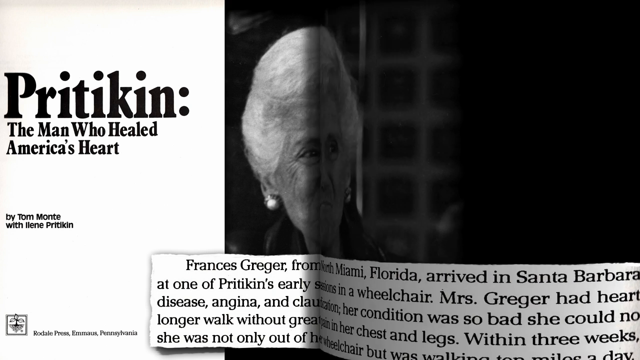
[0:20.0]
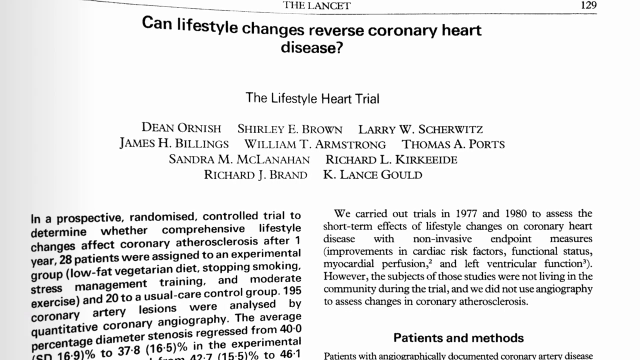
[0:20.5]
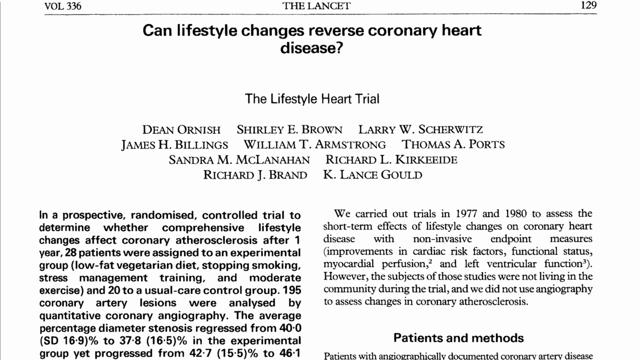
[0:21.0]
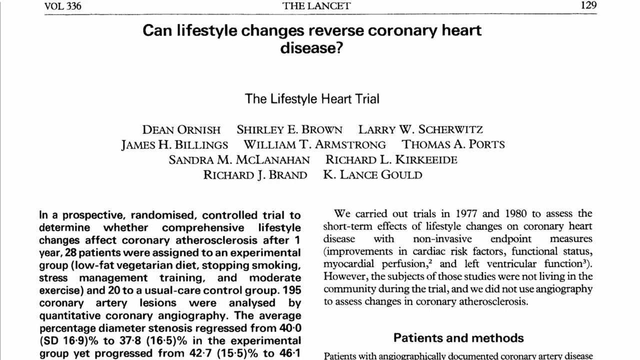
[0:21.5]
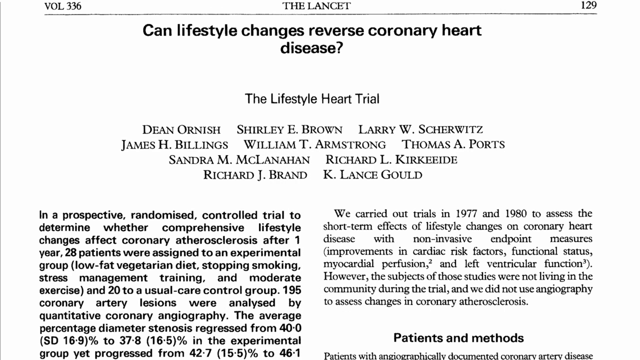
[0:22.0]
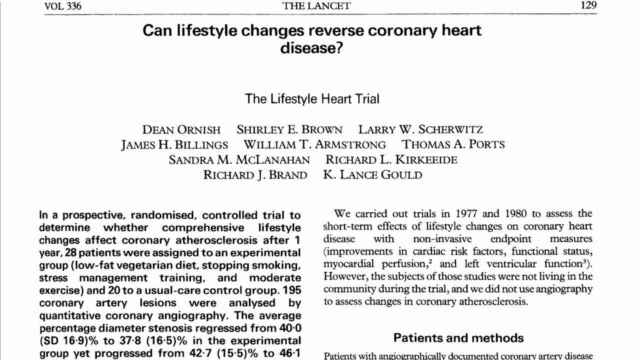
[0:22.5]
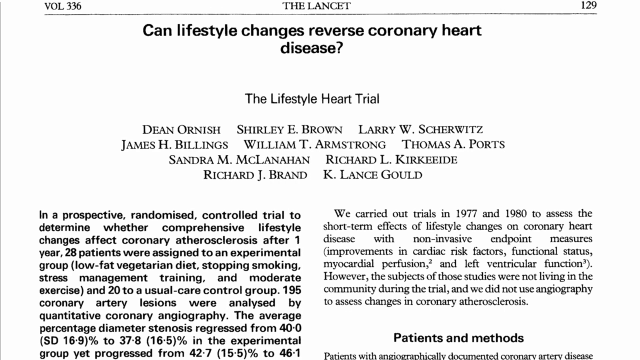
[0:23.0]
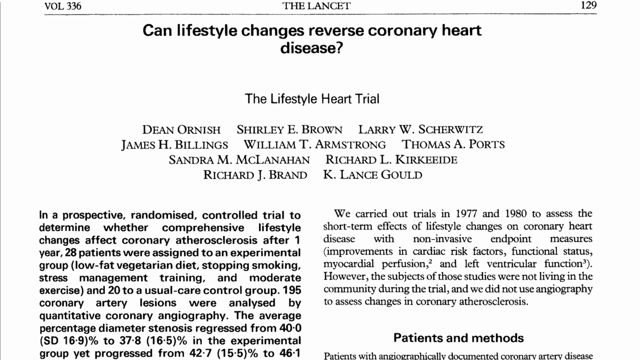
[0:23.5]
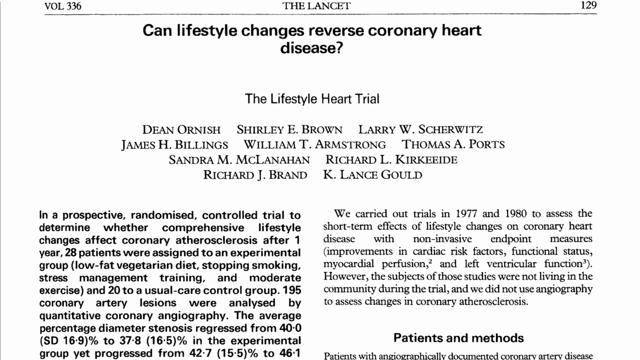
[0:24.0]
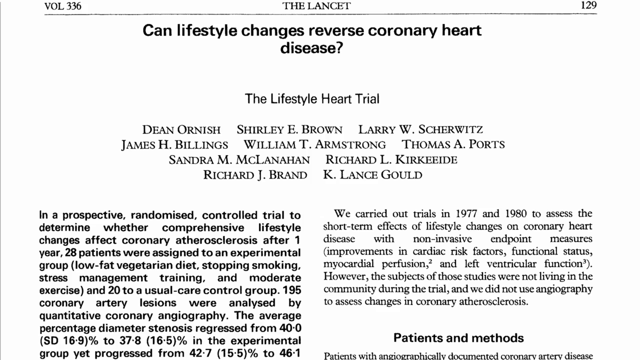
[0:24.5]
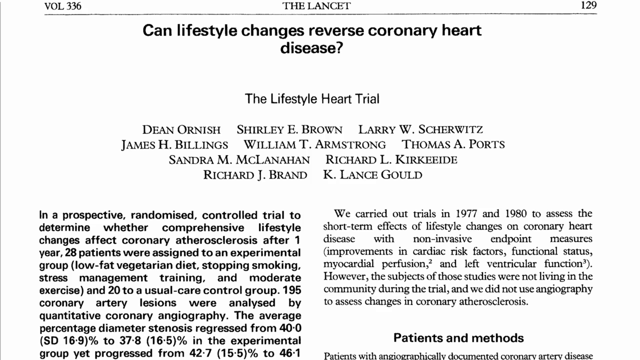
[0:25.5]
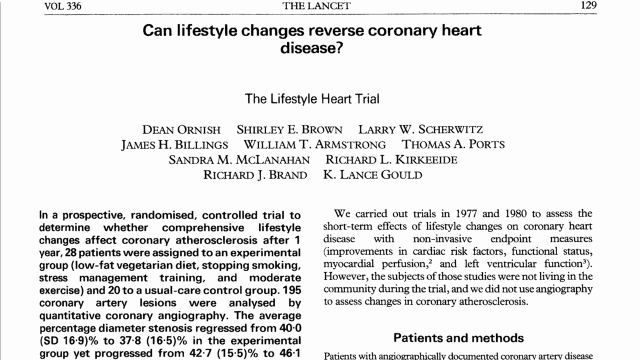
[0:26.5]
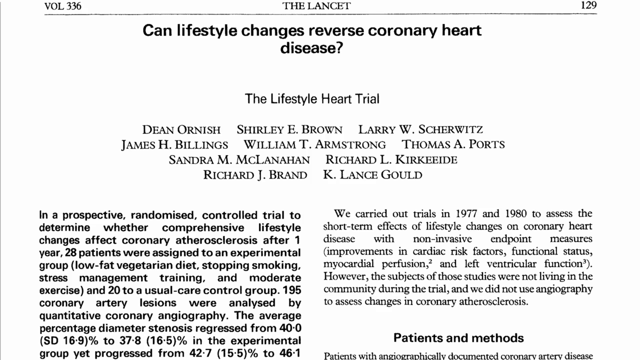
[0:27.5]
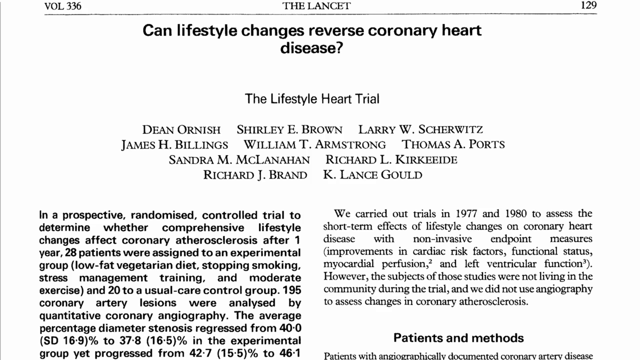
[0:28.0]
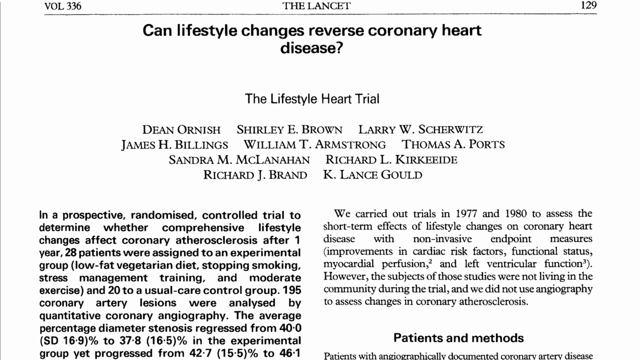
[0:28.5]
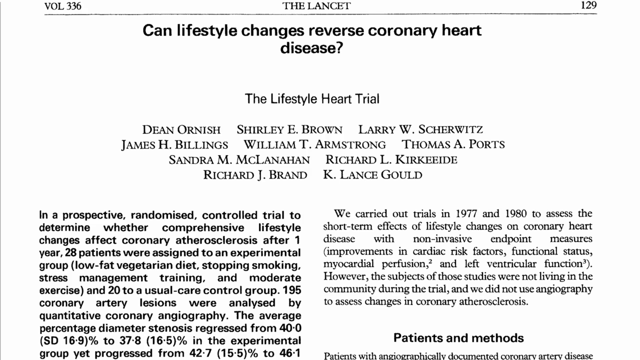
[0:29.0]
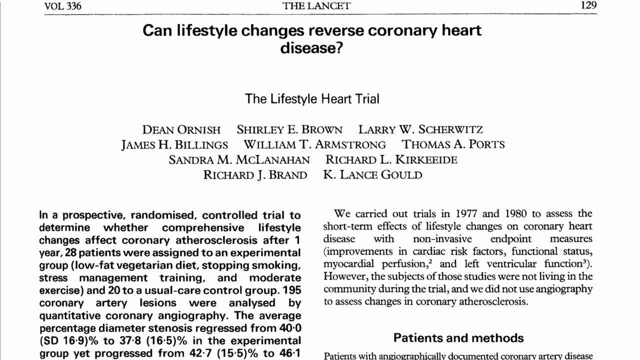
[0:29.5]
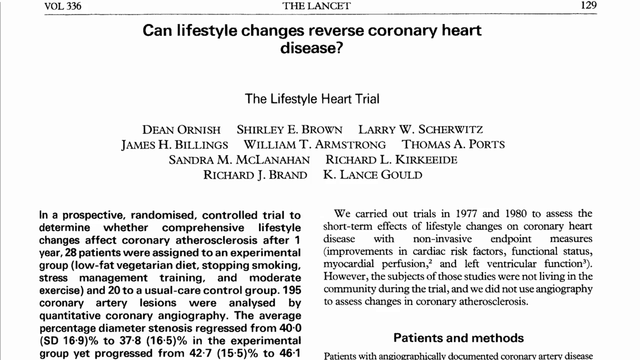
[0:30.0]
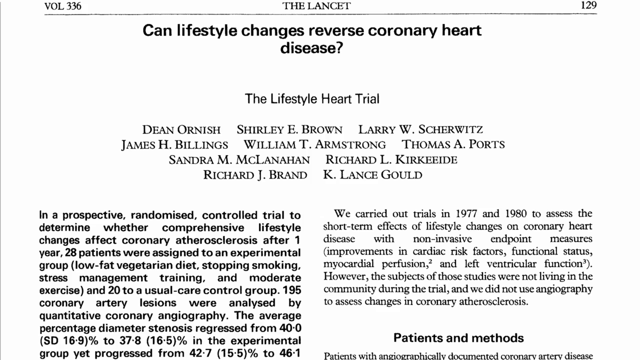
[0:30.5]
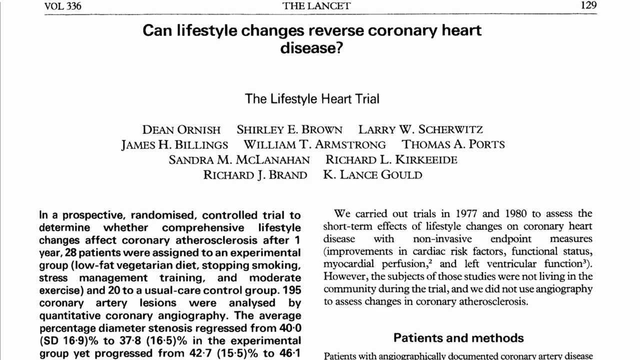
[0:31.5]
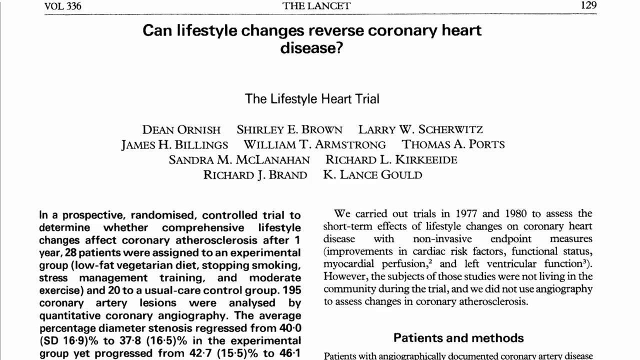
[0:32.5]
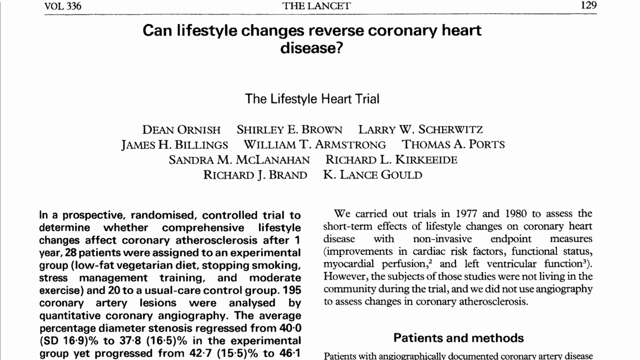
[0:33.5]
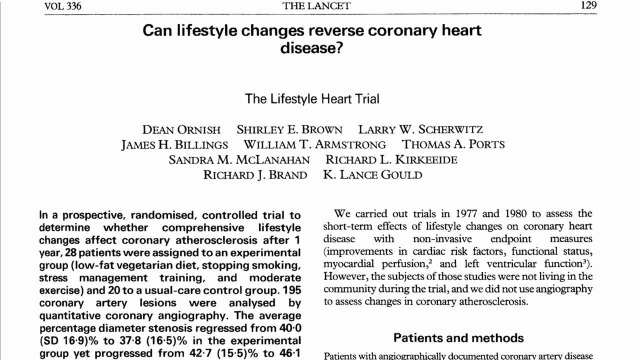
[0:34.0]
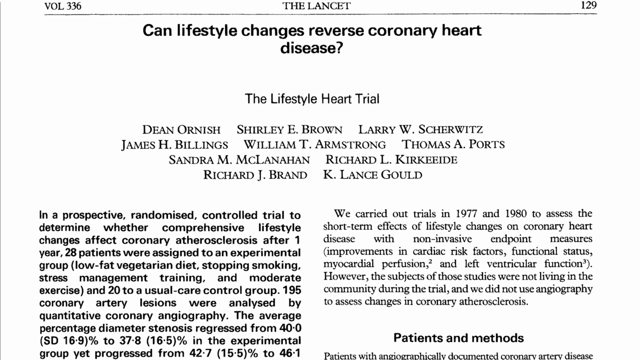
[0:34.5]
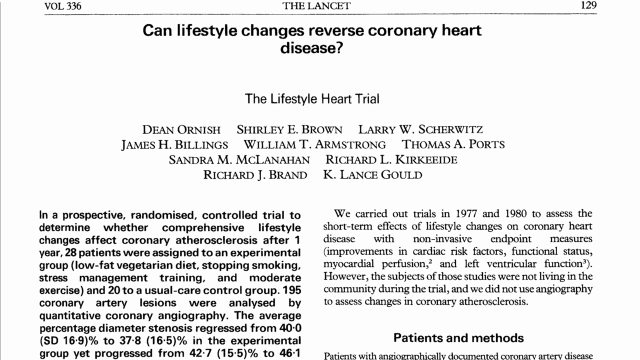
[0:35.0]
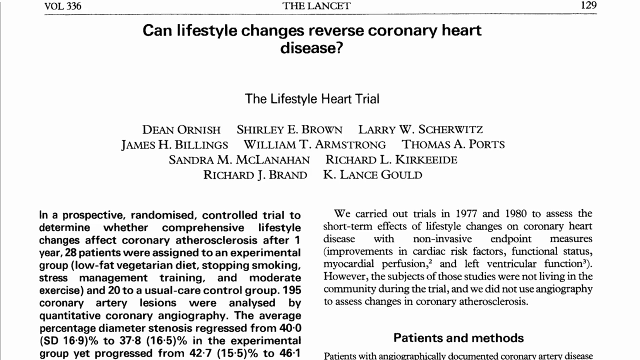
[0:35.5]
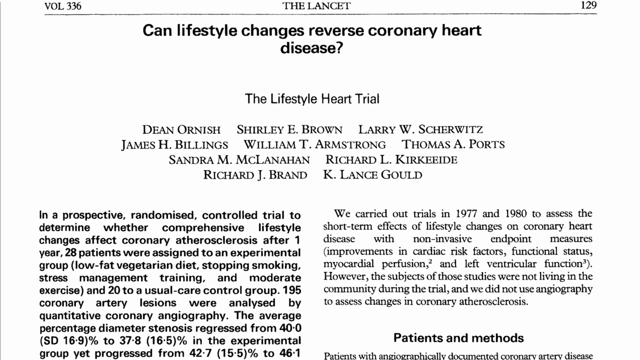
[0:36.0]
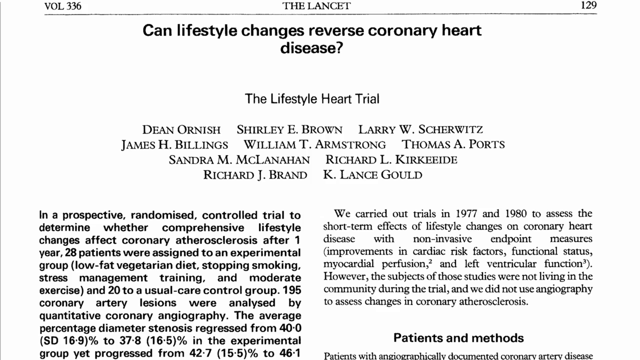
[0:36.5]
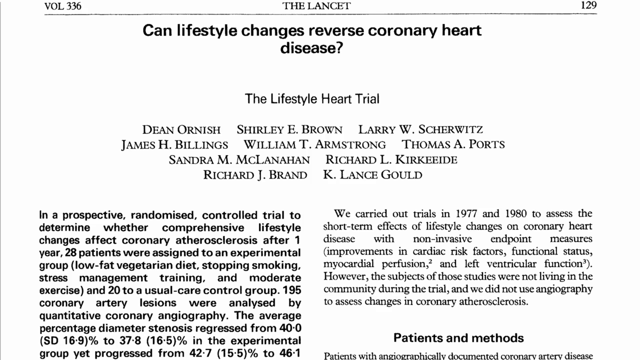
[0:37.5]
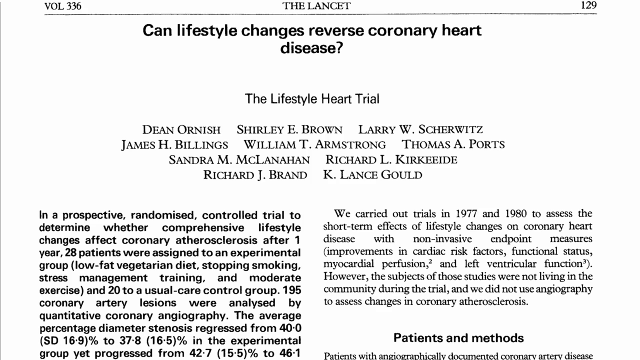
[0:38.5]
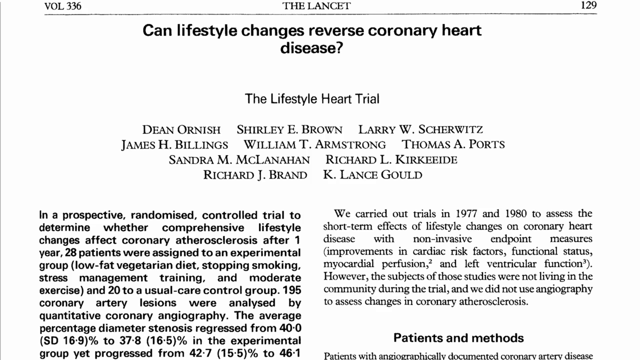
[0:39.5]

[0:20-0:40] The view flips, somewhat like turning to the next page. In the upper left corner is "VOL" along with "Lancet", and on the right side is the page number "129". A thin gray line runs across, and below it is a bold black title: "Can lifestyle changes reverse coronary artery disease?" Beneath it, in thin black non-bold text, is "A lifestyle heart trial". The body text includes "randomized control trial to determine whether comprehensive lifestyle changes affect coronary arteriosclerosis after one year", "Twenty-eight patients were assigned to experimental group", "195 coronary artery lesions were analyzed", "The average percentage diameter regressed from 40 to 37.8", and "We carried out trials in 1977 and 1980 to assess the short-term effects."